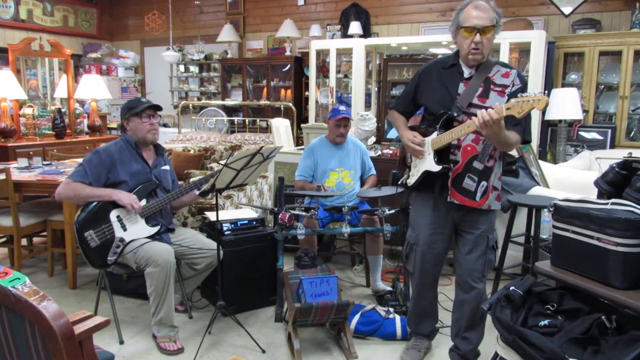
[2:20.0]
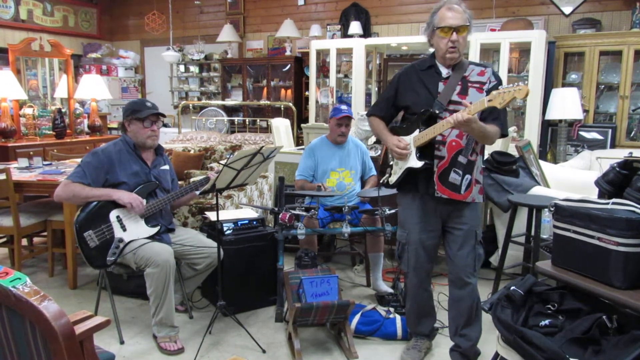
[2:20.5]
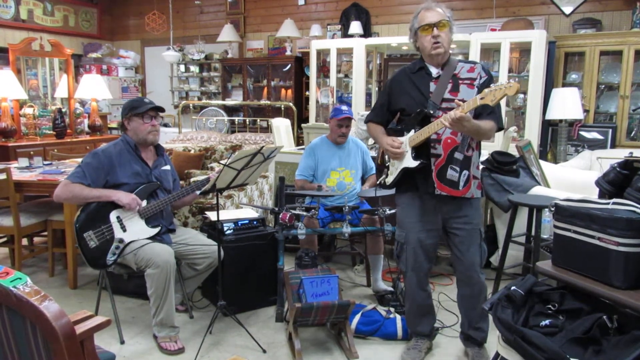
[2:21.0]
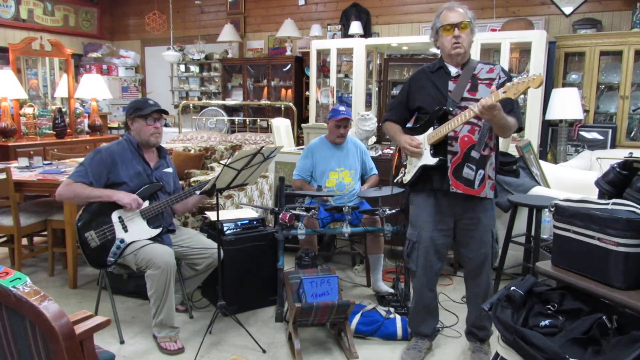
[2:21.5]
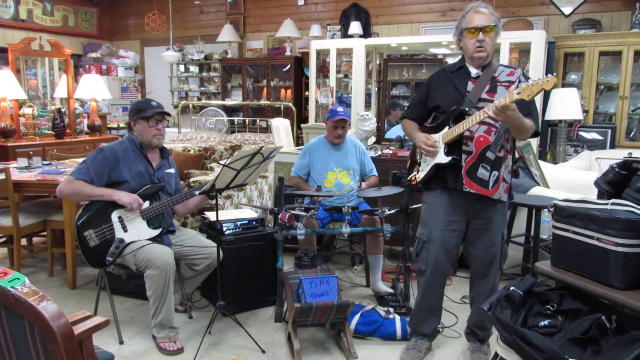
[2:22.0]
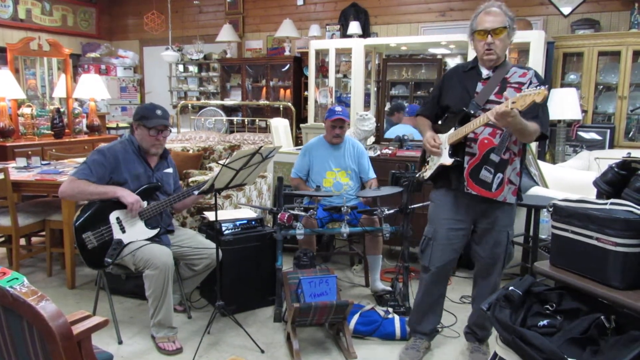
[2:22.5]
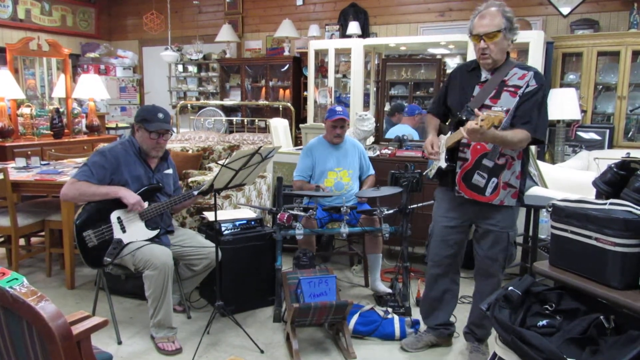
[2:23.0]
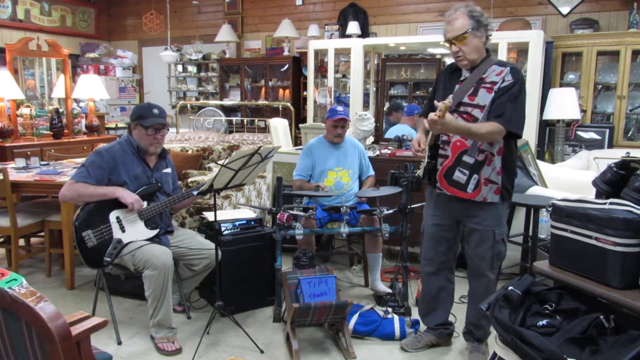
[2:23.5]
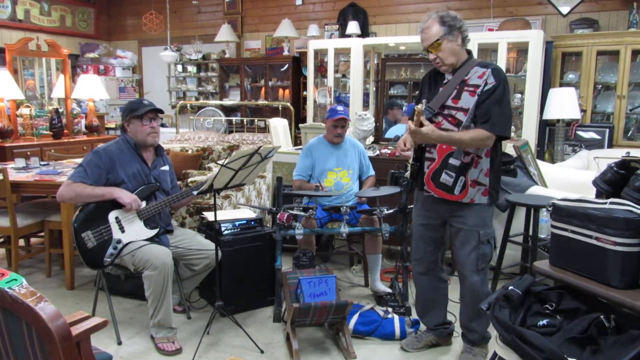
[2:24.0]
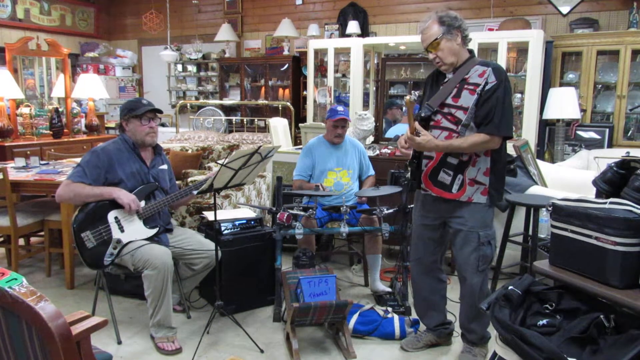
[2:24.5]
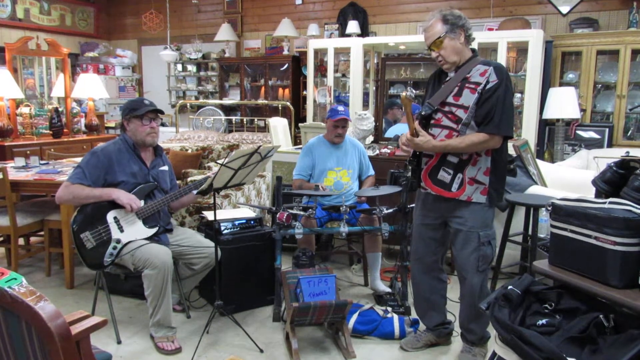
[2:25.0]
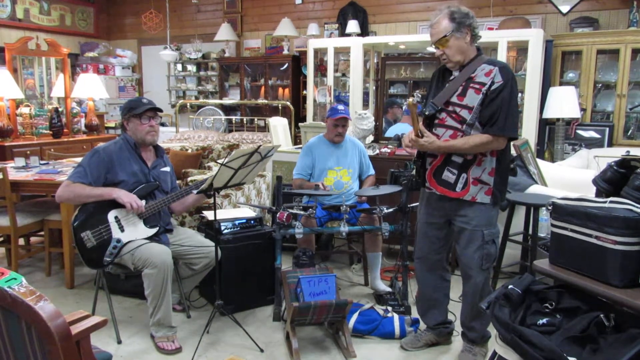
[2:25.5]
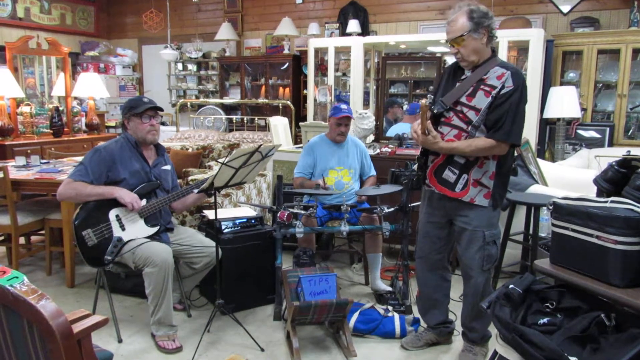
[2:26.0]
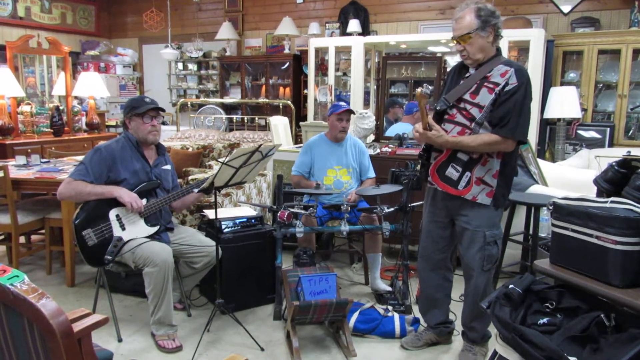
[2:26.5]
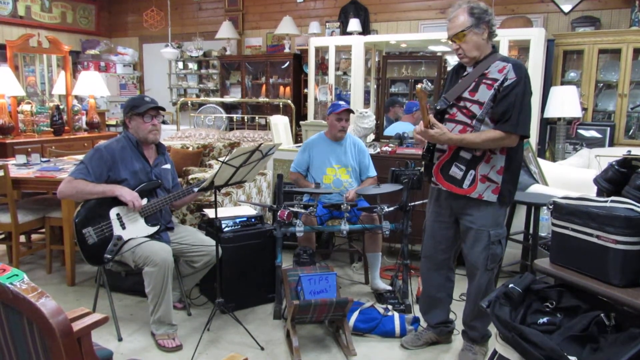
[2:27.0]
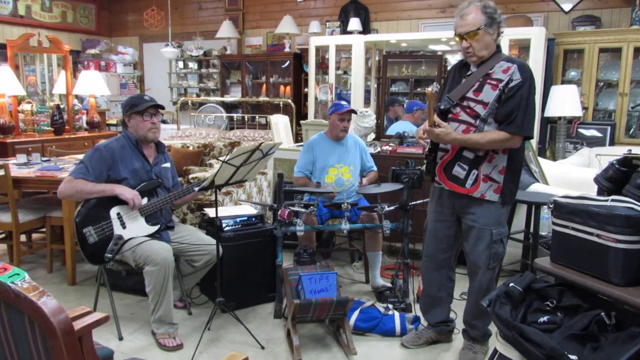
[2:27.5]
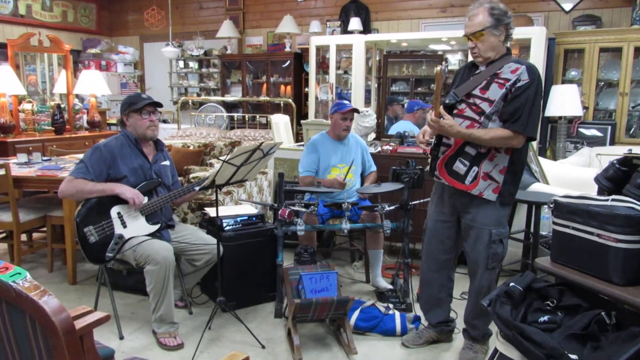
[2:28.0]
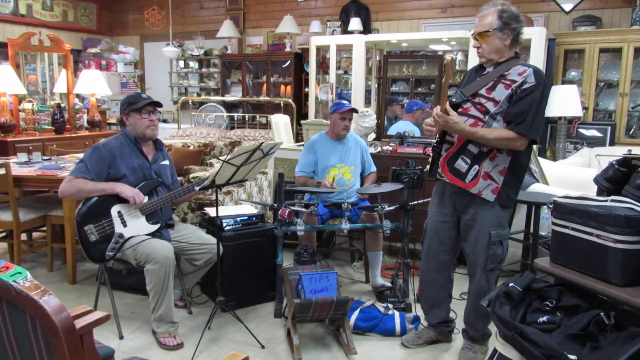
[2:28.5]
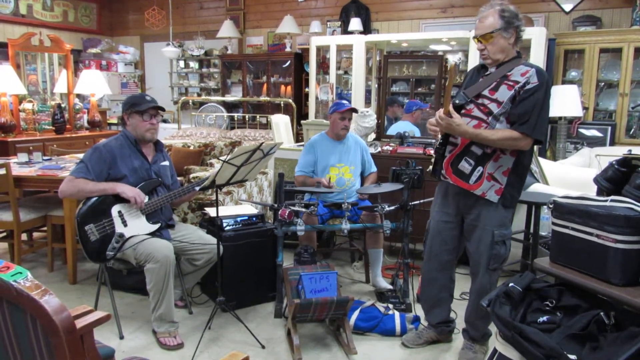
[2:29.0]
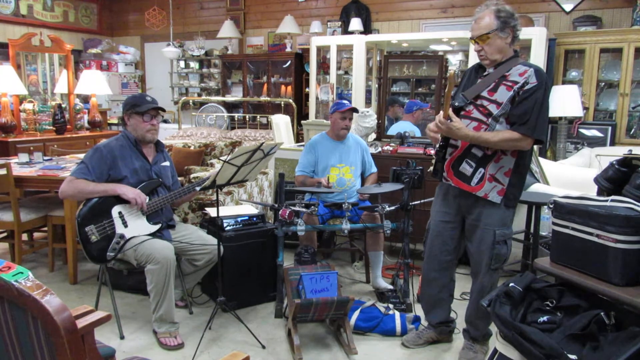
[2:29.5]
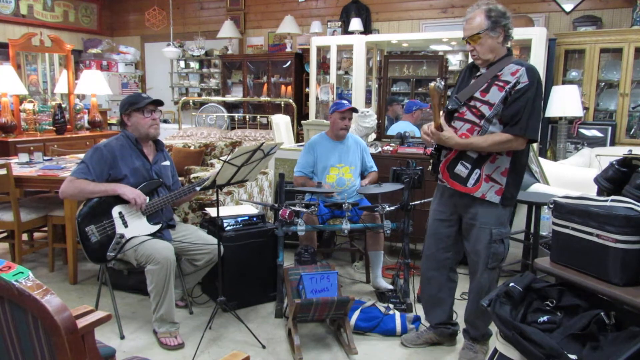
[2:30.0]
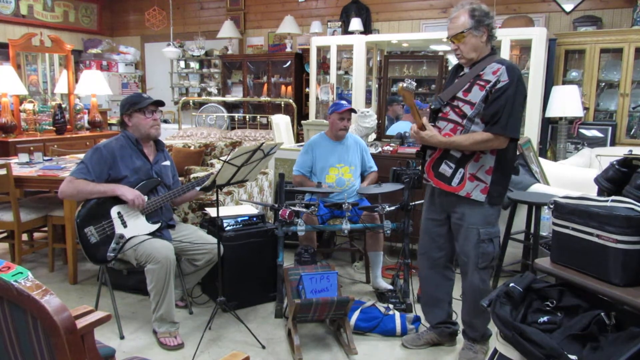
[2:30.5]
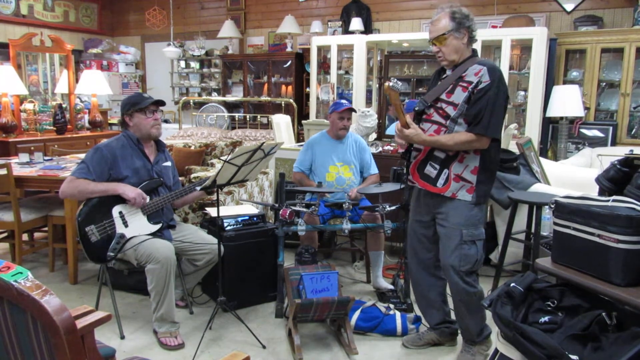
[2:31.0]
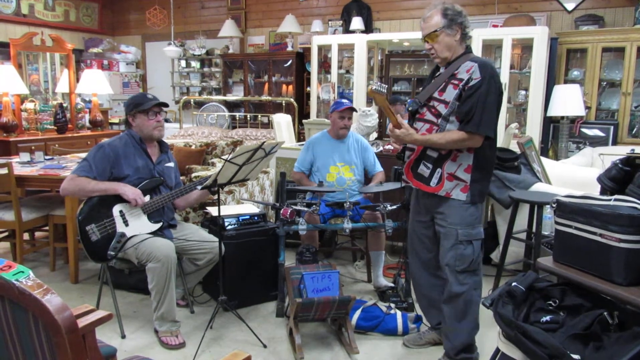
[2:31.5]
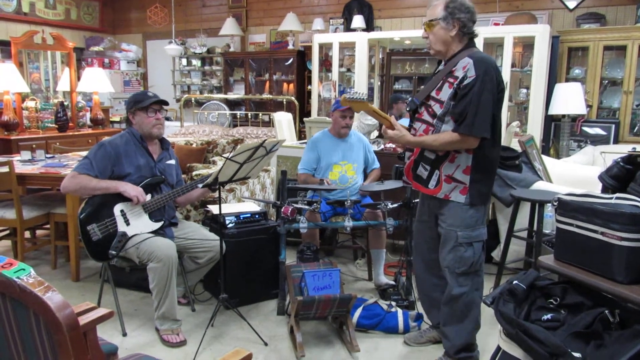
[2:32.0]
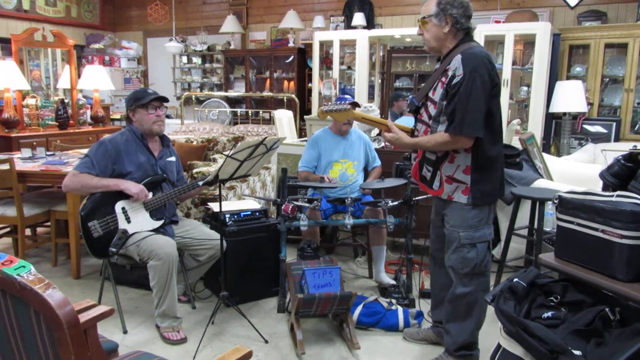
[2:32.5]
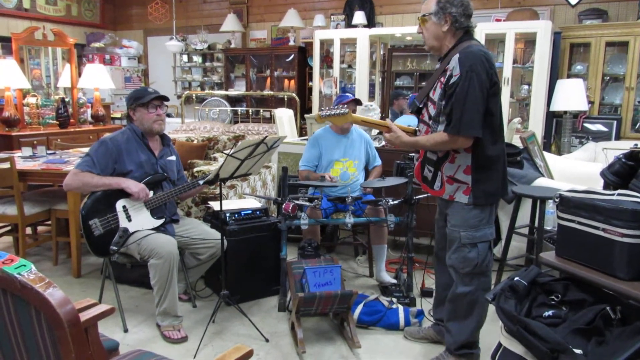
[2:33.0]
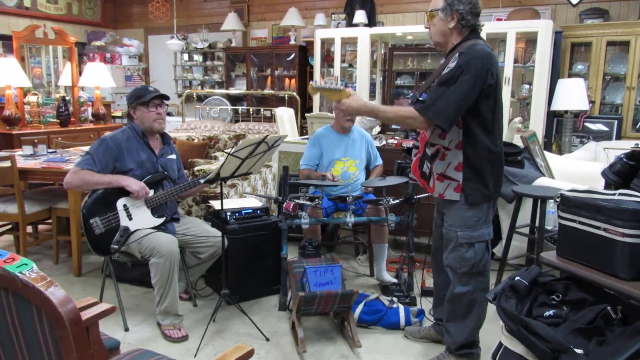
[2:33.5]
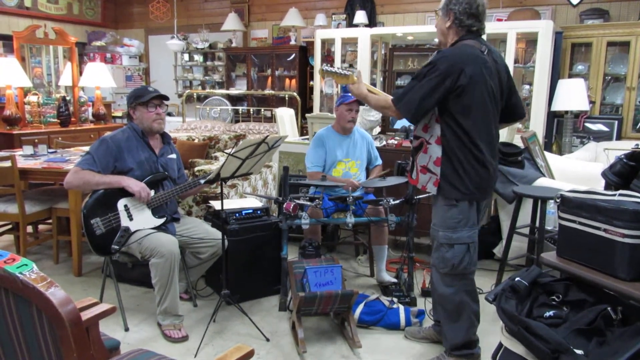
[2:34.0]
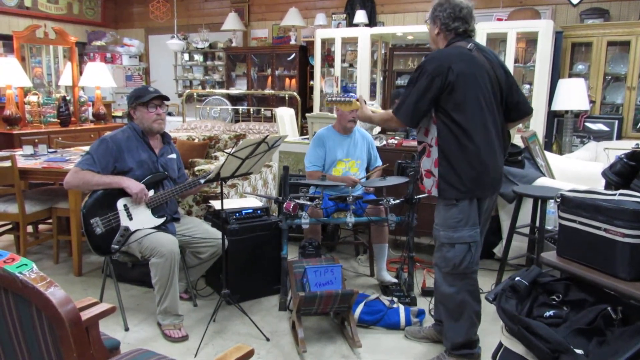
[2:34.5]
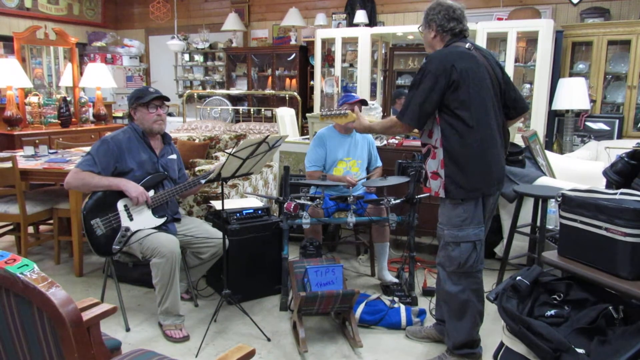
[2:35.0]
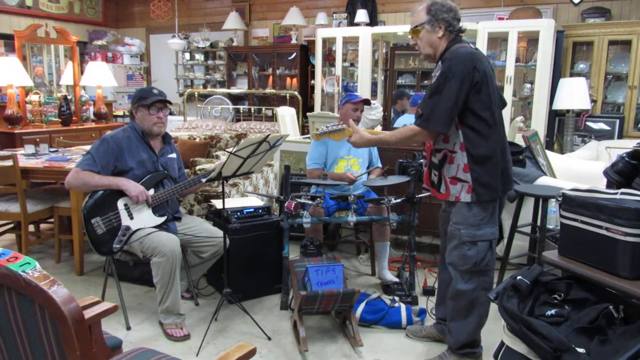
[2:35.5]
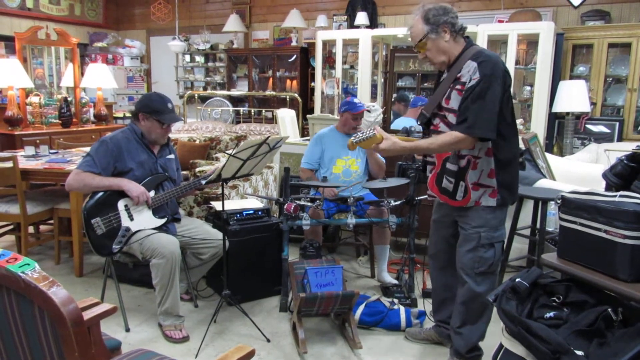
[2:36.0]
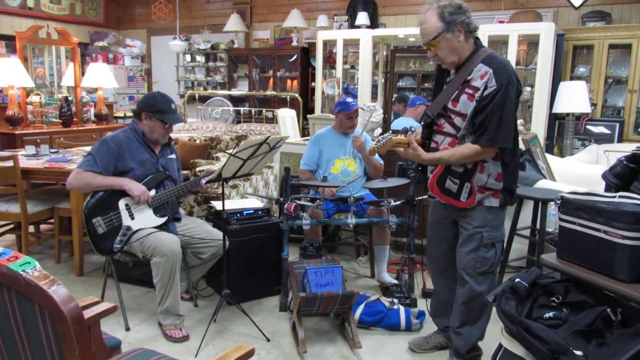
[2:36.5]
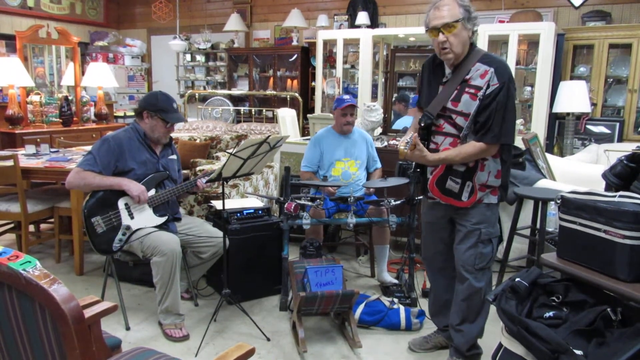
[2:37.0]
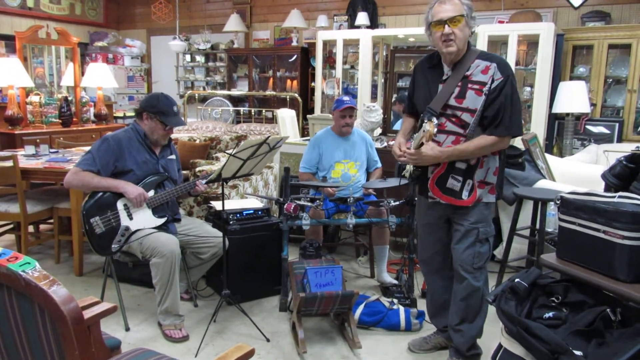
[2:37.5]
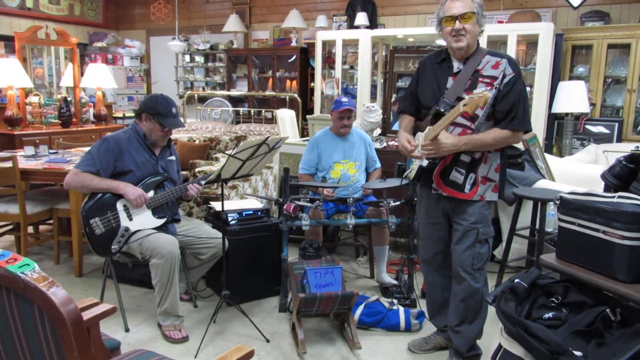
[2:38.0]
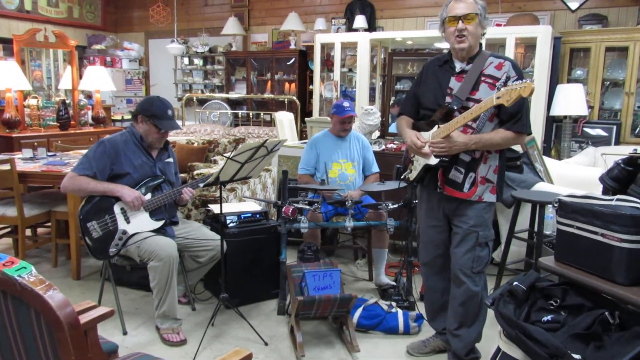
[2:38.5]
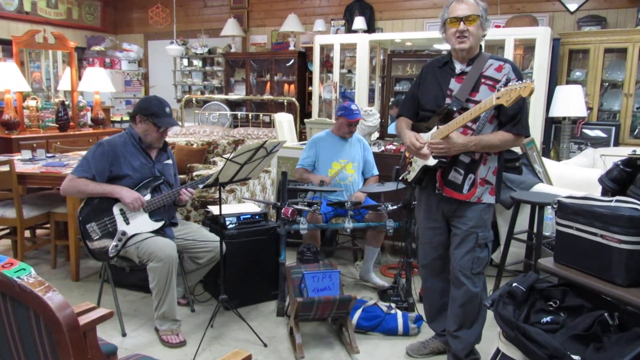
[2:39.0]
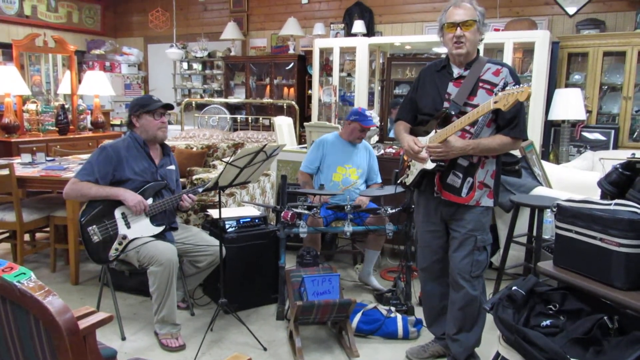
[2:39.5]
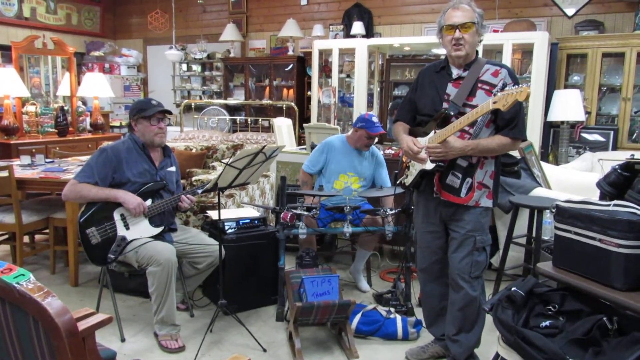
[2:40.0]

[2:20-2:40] The lead guitarist, with yellow glasses and receding gray hair, is getting into it. The drummer speeds up a little while watching the lead guitarist, and the bass player is still guiding. The lead guitarist then turns to the drummer, apparently to pause or stop, and then looks at the camera and talks. In the background is the white cabinet, the largest one, and the dresser to the left with two lamps on it, one maybe a reflection. A fan is going in the background. Something black, possibly a jacket, is on top of the white cabinet, and shoes are on top of something. There is a stool for the lead guitarist, but he is standing rather than sitting. It seems to be toward the end of the song, as he looks at the drummer, seemingly to end it.